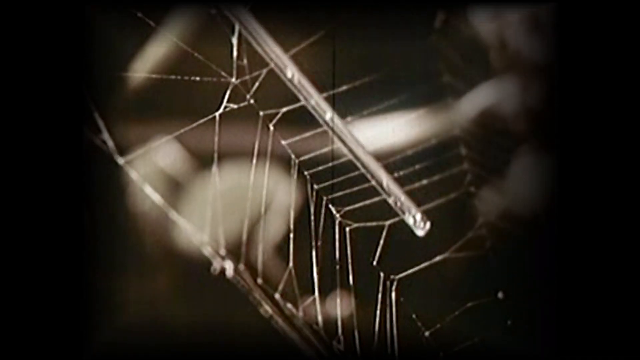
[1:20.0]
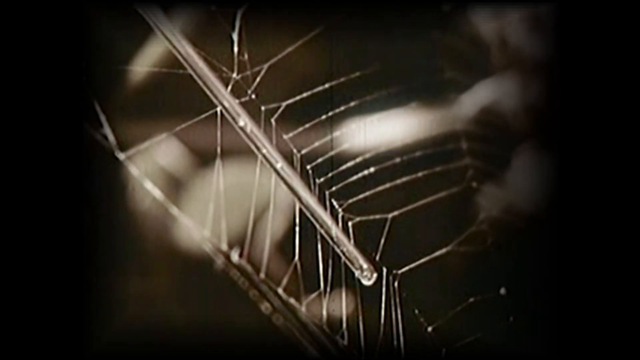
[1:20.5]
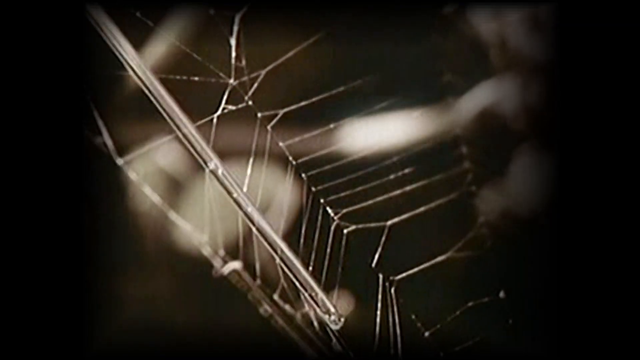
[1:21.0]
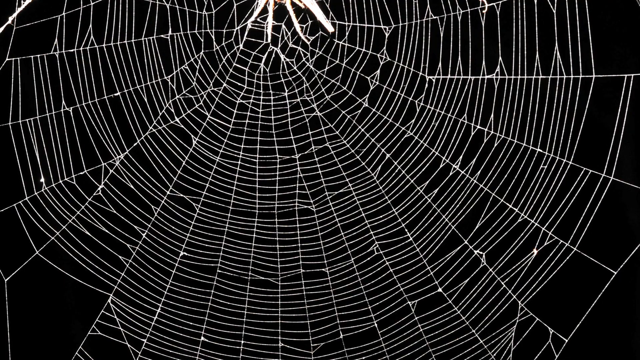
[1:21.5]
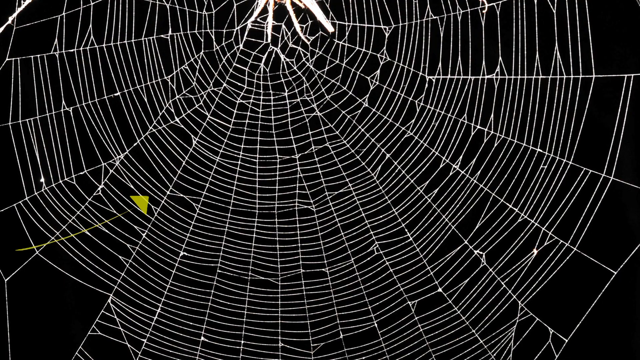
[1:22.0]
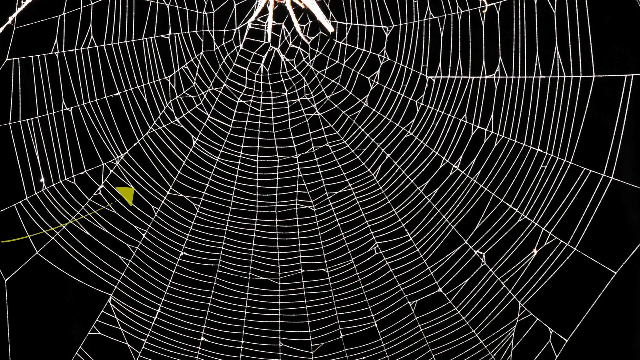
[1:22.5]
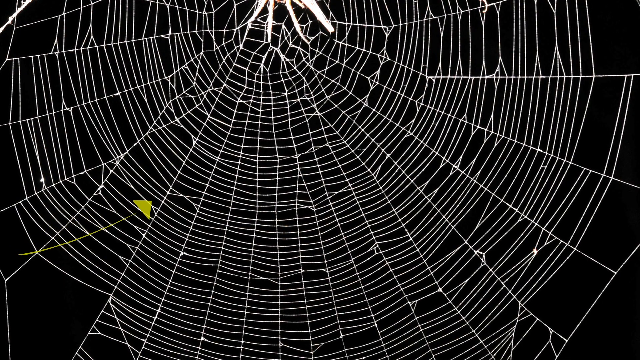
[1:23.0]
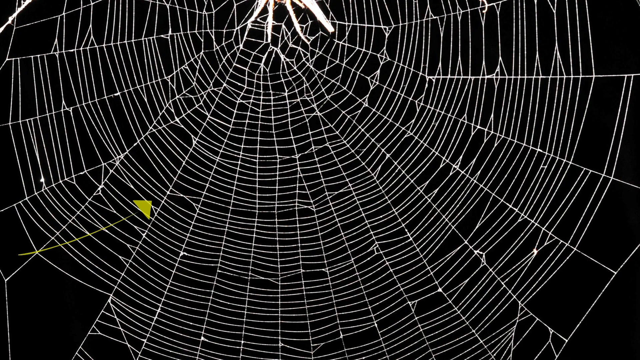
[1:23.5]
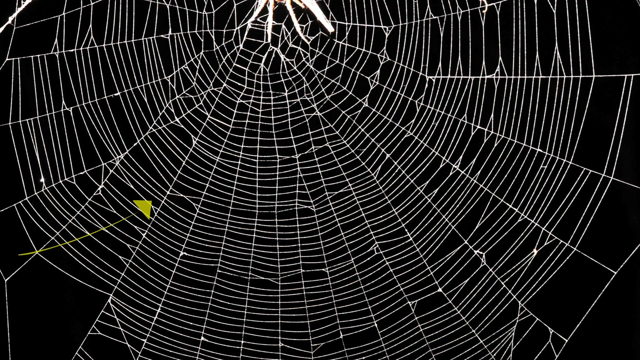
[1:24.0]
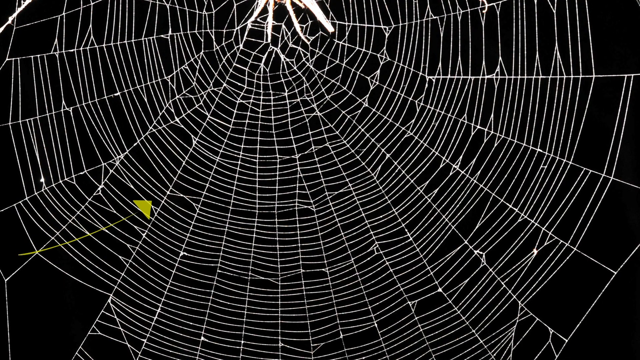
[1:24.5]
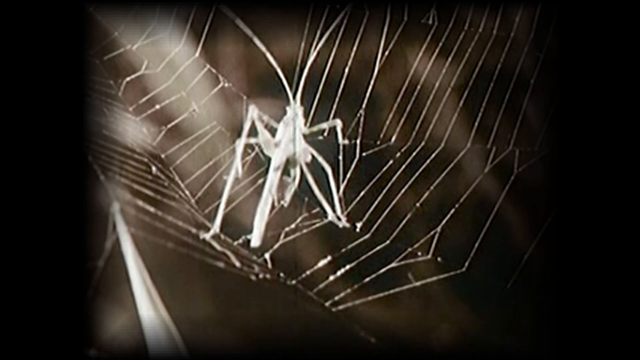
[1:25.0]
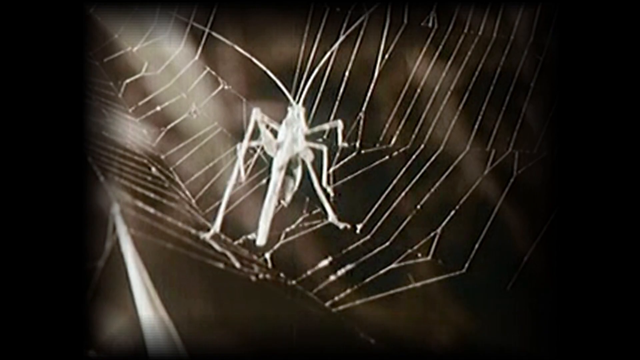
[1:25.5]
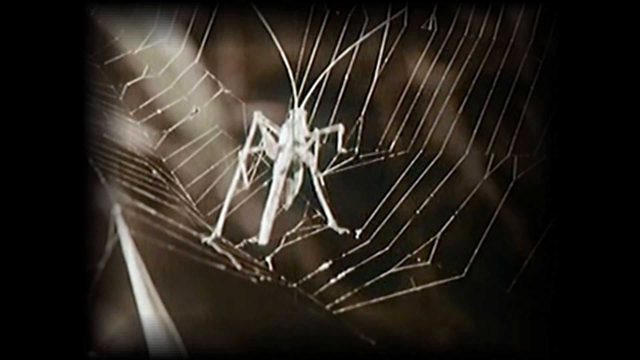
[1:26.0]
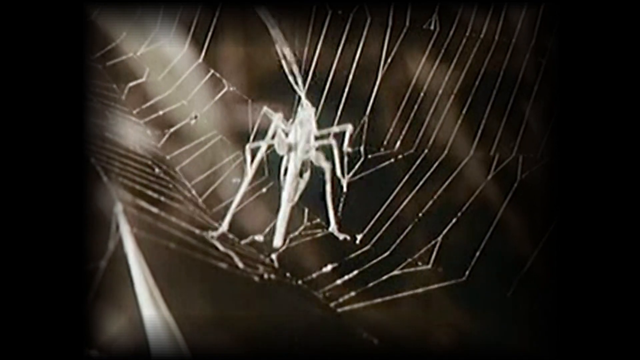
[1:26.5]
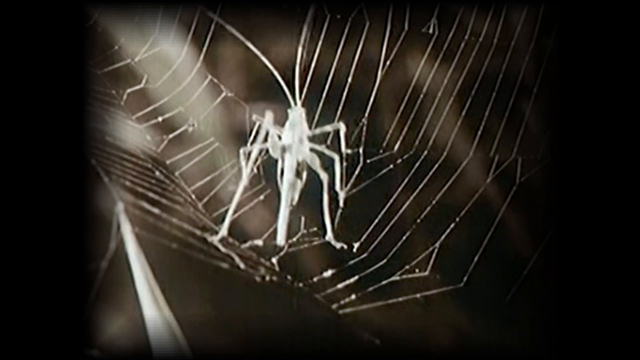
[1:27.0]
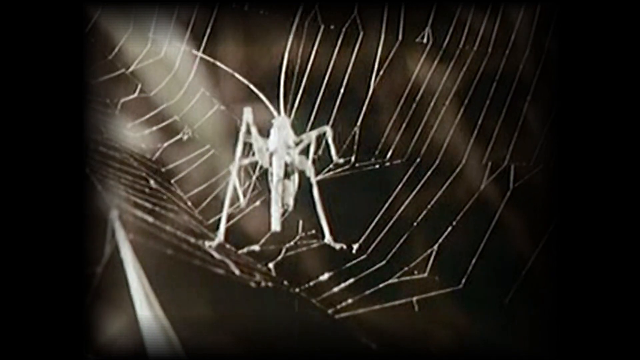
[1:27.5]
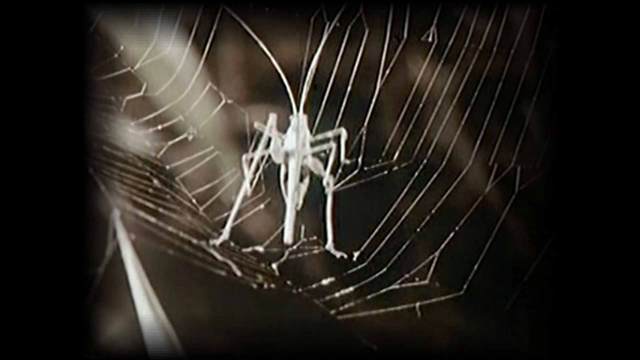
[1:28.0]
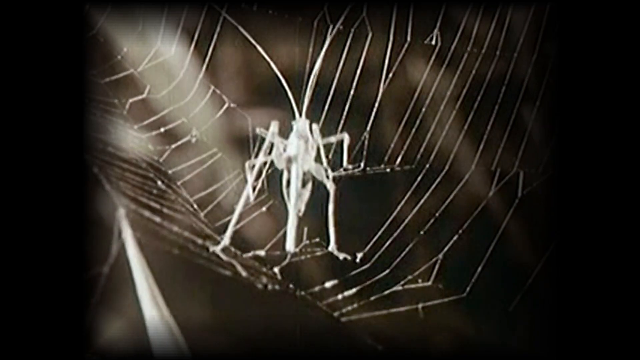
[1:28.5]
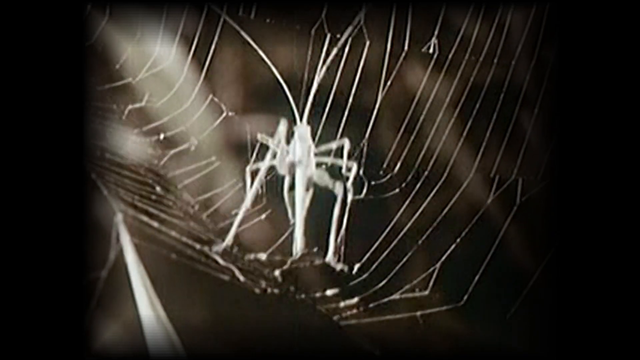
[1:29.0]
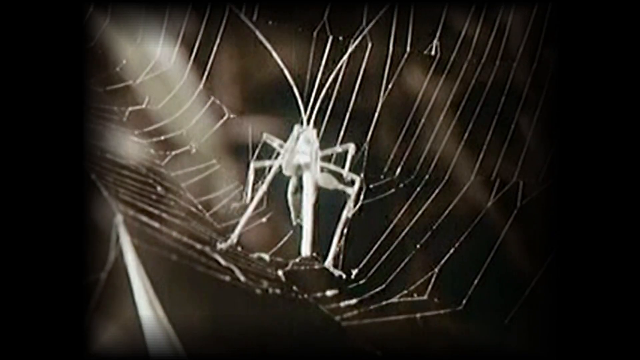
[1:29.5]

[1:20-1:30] Someone stretches a straw and rubs it across a spider's web to show the stickiness of the web. A green arrow points to one of the lines on the web and seems to move down it. A close-up of a spider shows it moving its leg; the spider looks possibly whitish, though the footage is black and white, which might account for that.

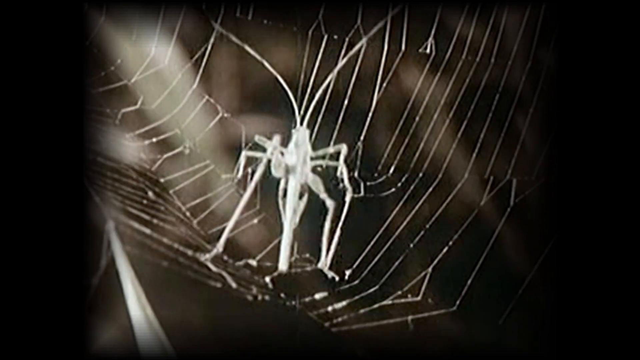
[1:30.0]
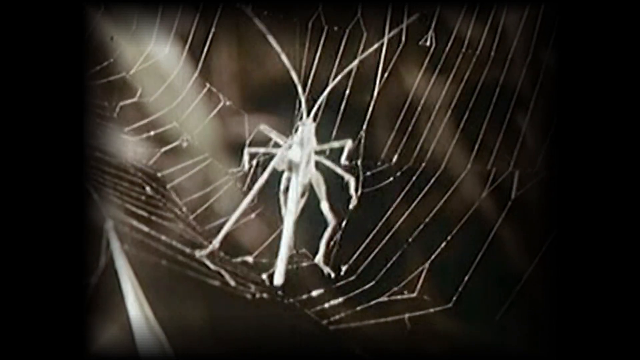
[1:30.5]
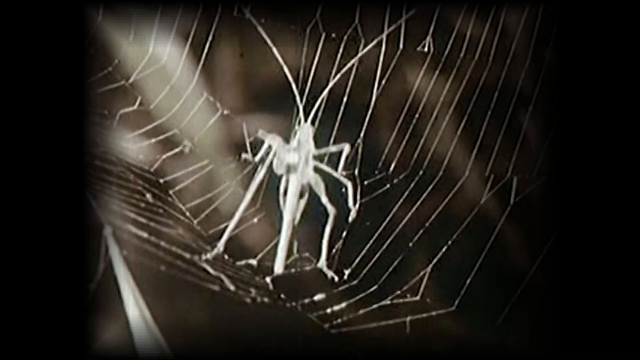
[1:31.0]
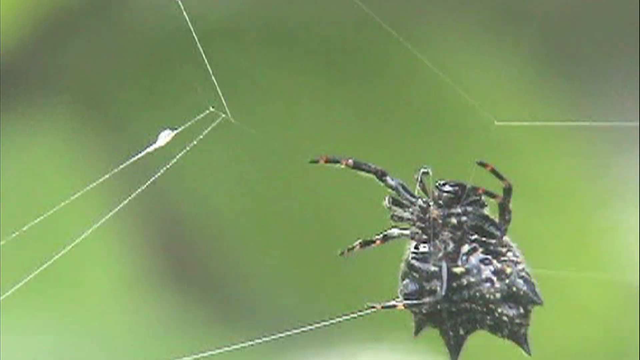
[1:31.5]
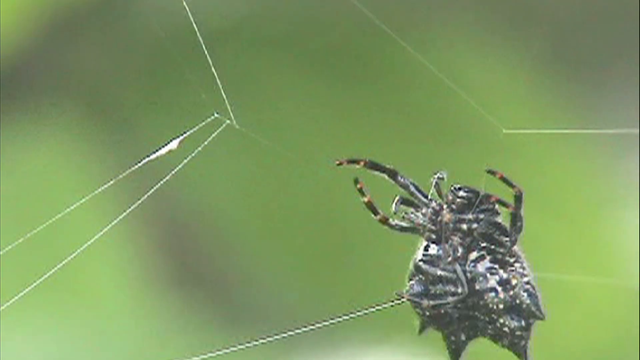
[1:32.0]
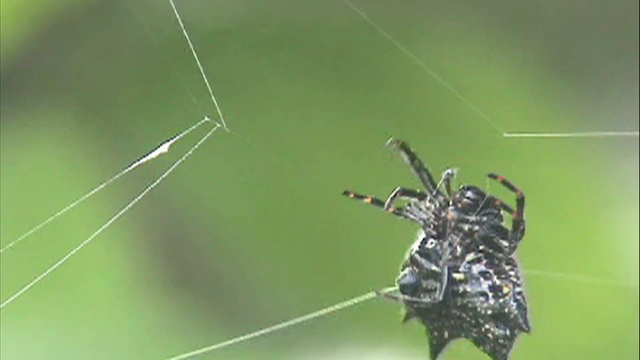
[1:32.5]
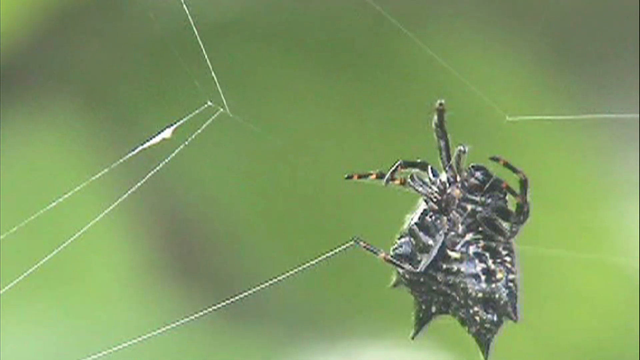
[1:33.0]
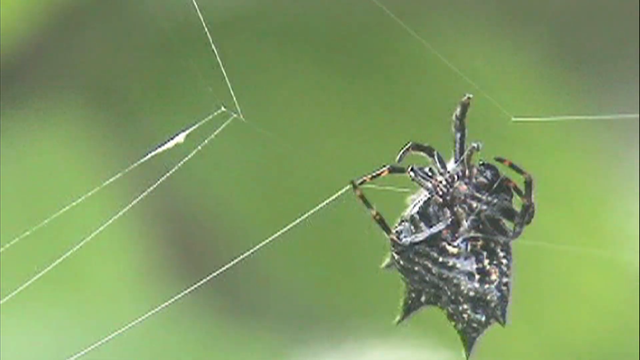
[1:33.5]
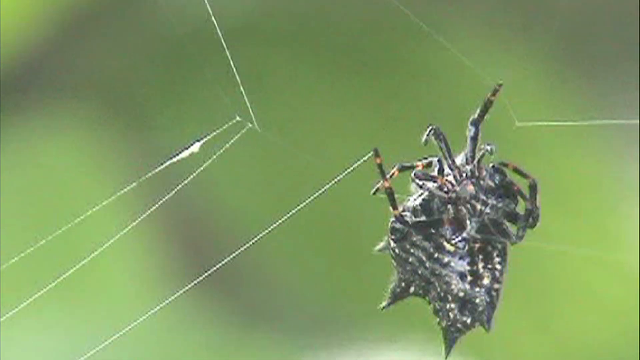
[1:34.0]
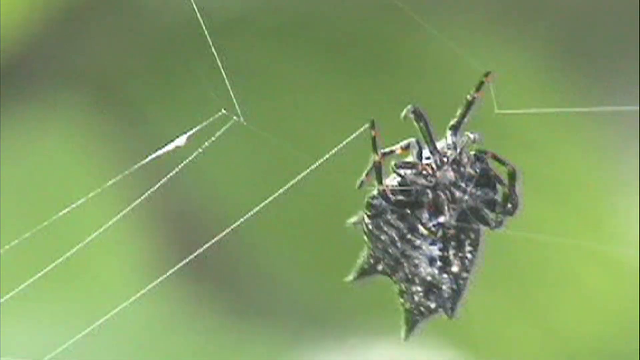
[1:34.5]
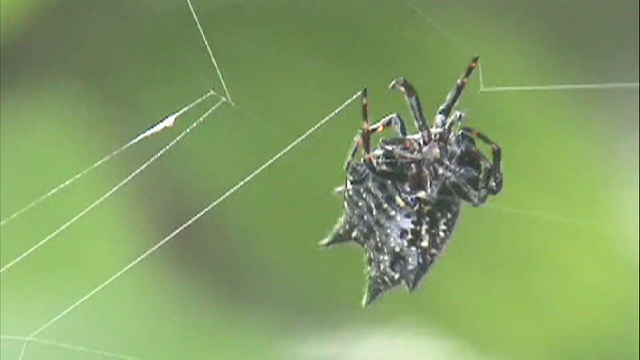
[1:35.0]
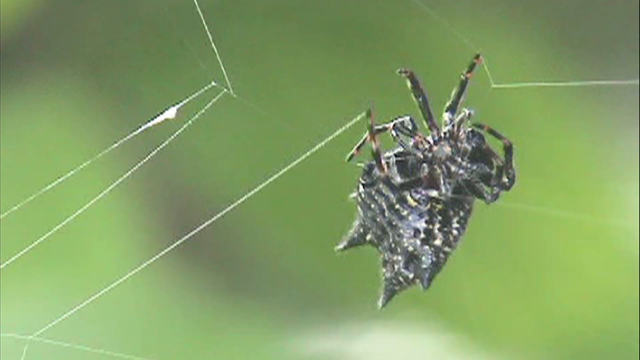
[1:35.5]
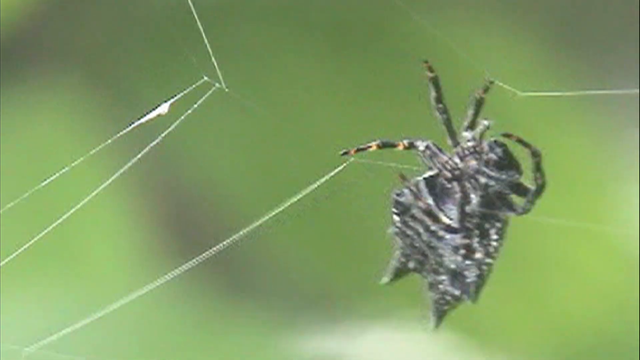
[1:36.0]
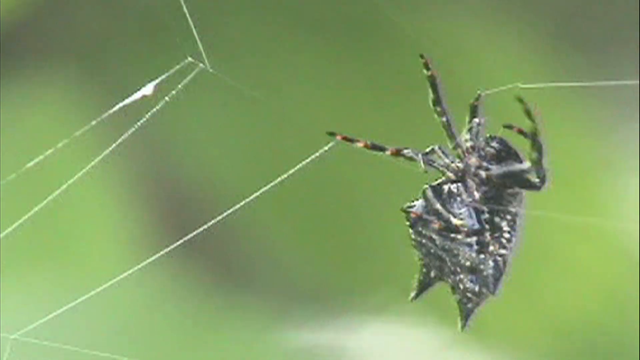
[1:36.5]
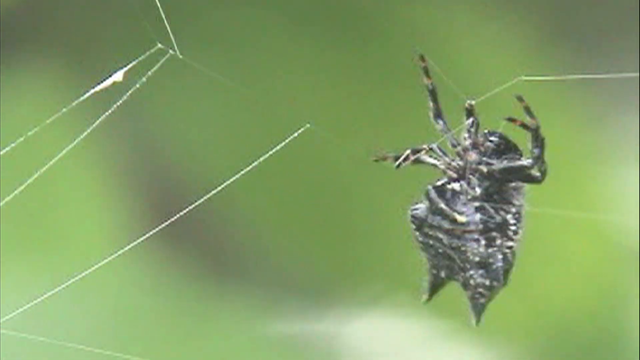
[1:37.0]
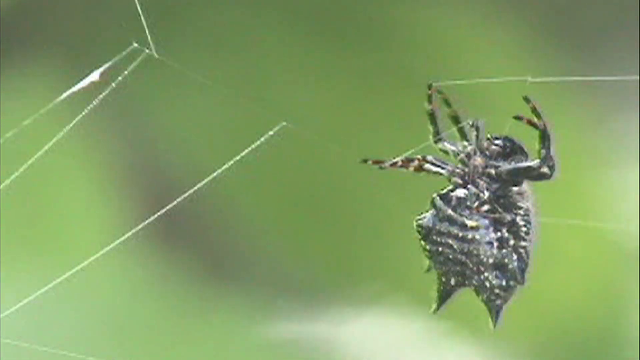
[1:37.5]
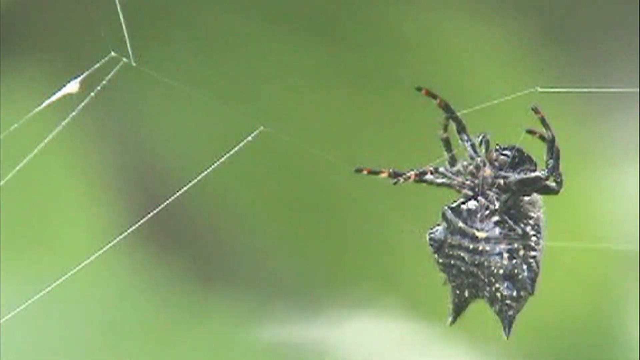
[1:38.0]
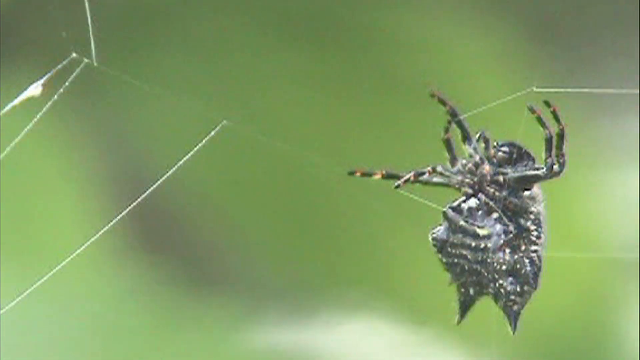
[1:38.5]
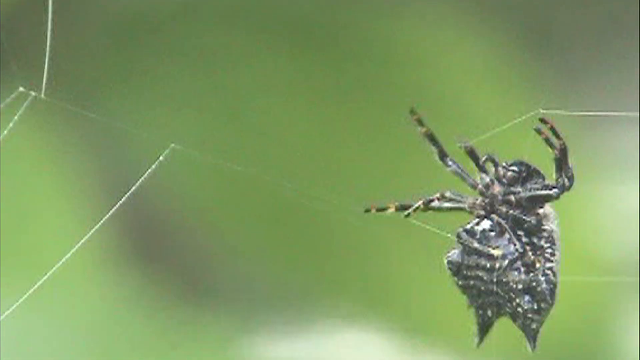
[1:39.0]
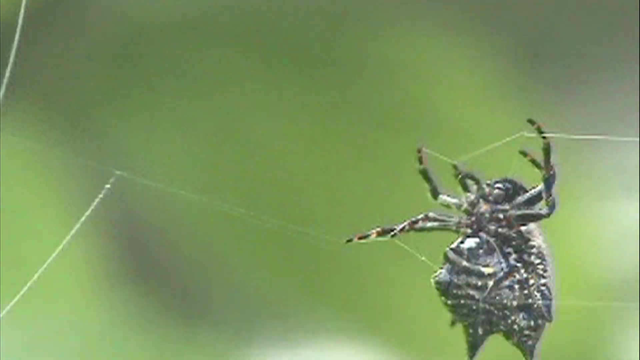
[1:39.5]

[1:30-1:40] A grasshopper is stuck in a spider's web, and the video quickly cuts to a black spider with two pokey tails coming out the back that sort of hangs upside down. It is building its web and stretching, and it walks without getting stuck, whereas the grasshopper is fully stuck to the web. The first part appears to be in black and white; in the second part the whole background is green, the spider is black and gray, and the faint, clearish white lines of the web are sort of visible.